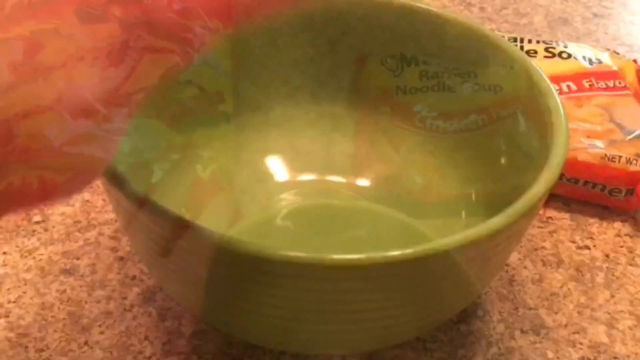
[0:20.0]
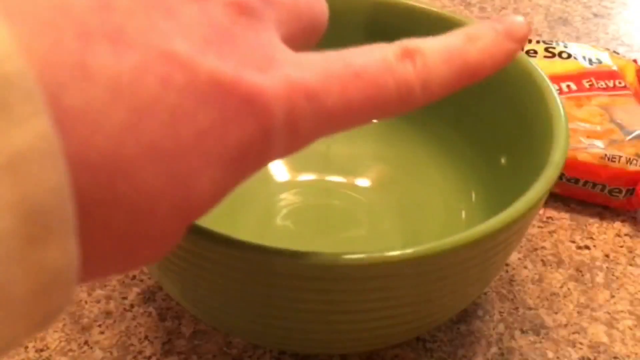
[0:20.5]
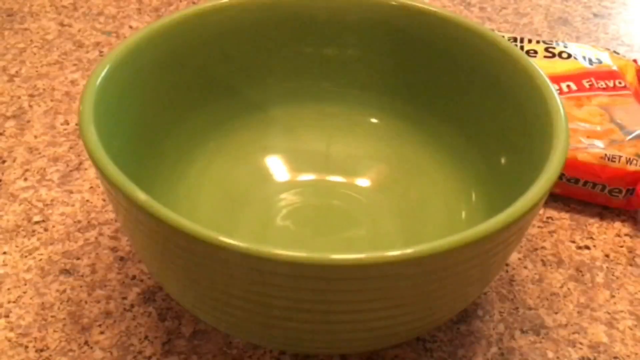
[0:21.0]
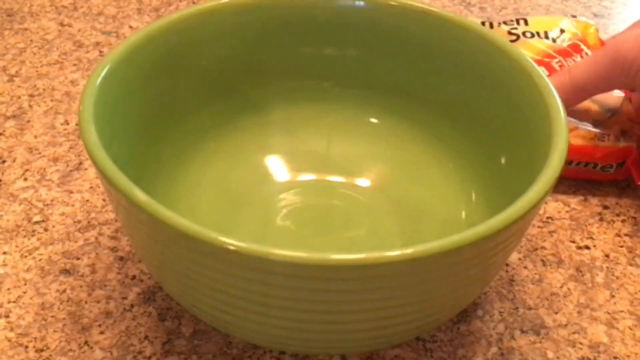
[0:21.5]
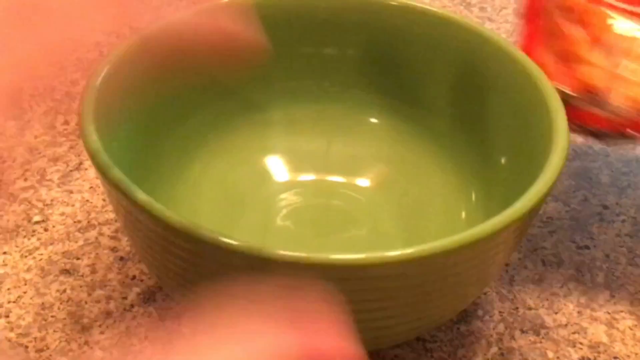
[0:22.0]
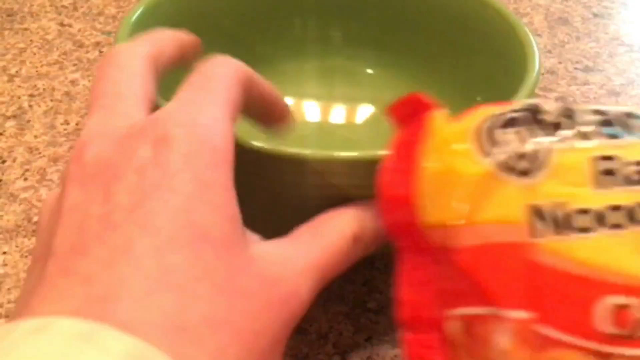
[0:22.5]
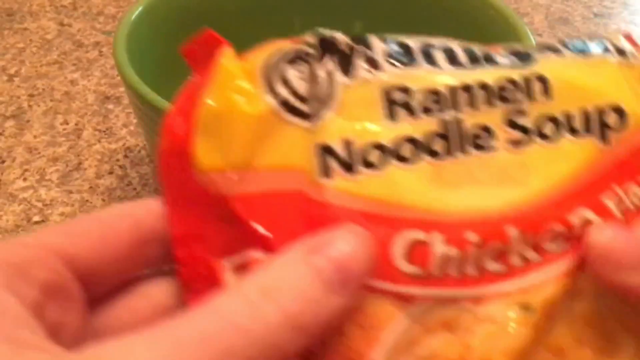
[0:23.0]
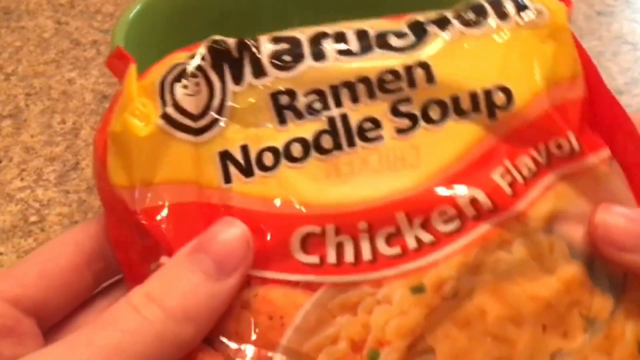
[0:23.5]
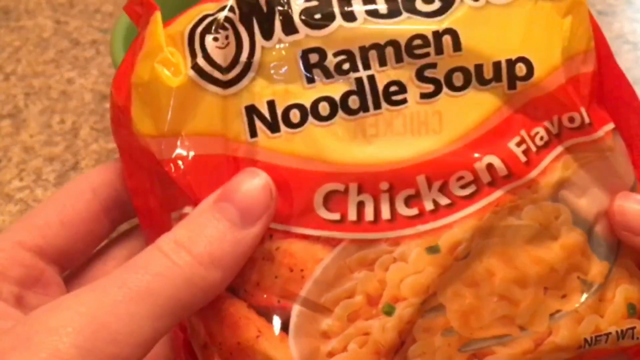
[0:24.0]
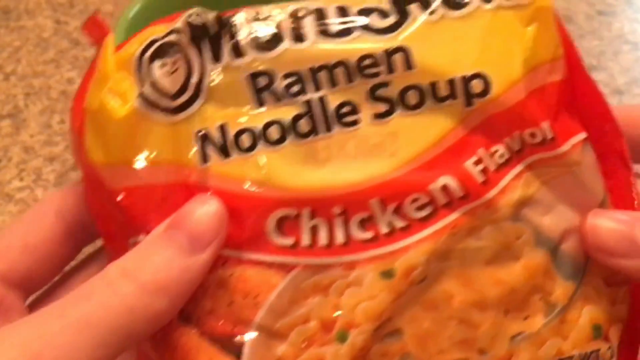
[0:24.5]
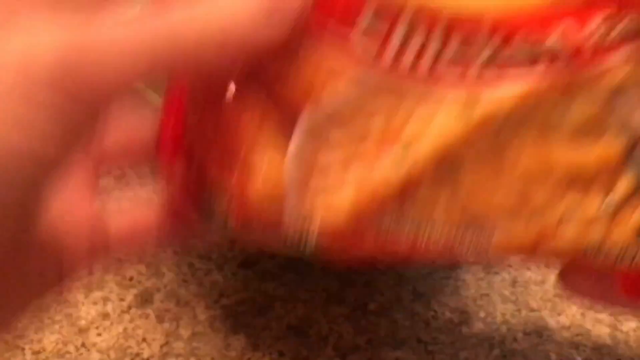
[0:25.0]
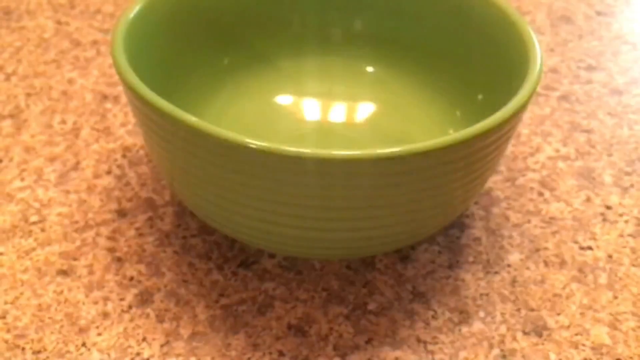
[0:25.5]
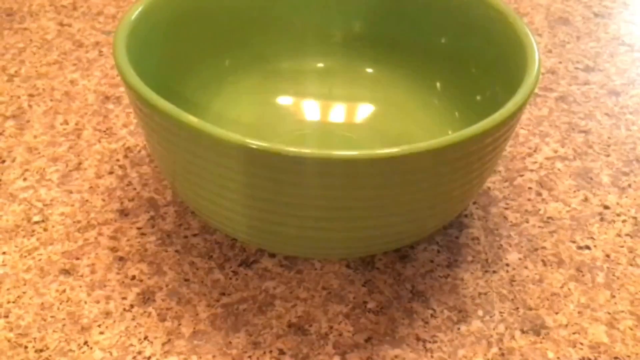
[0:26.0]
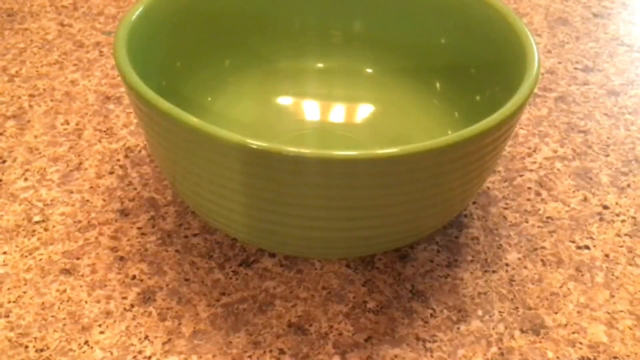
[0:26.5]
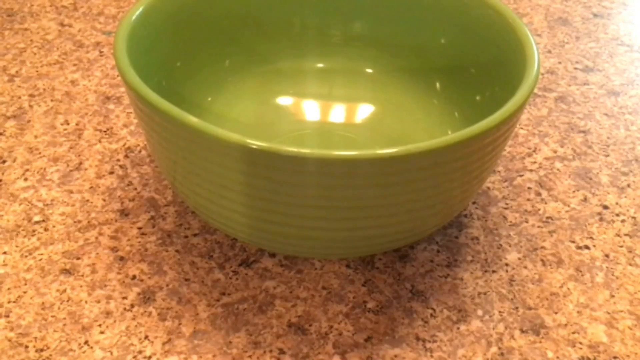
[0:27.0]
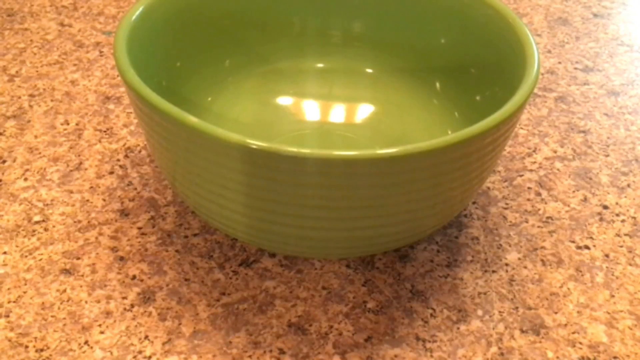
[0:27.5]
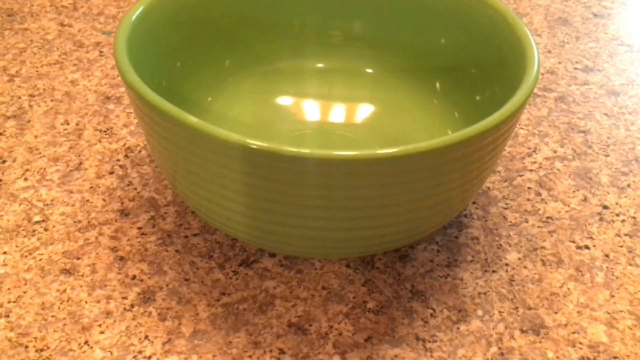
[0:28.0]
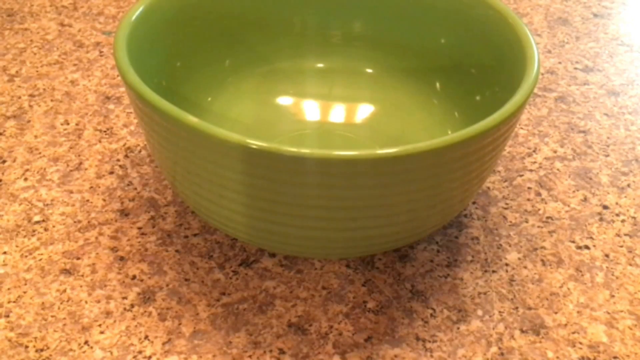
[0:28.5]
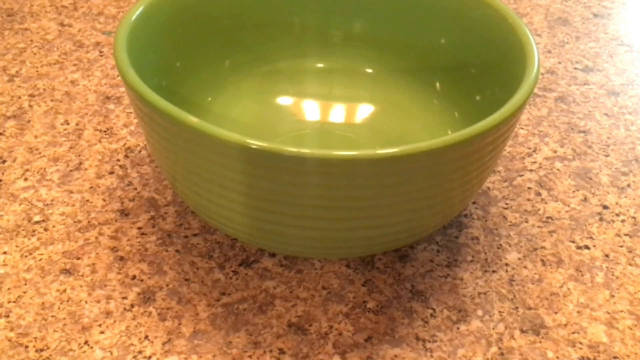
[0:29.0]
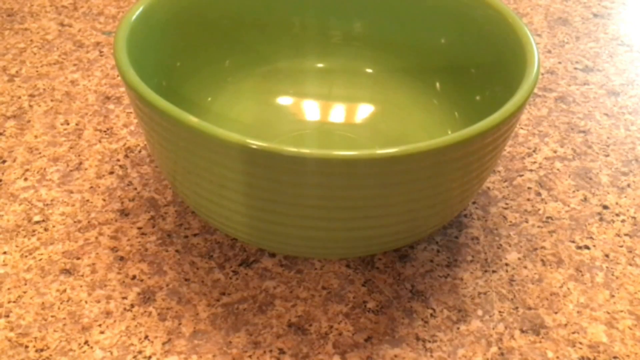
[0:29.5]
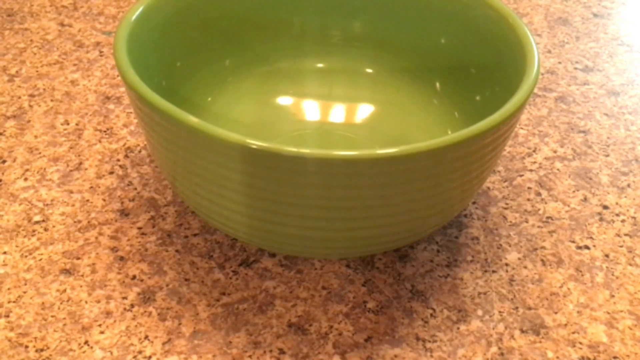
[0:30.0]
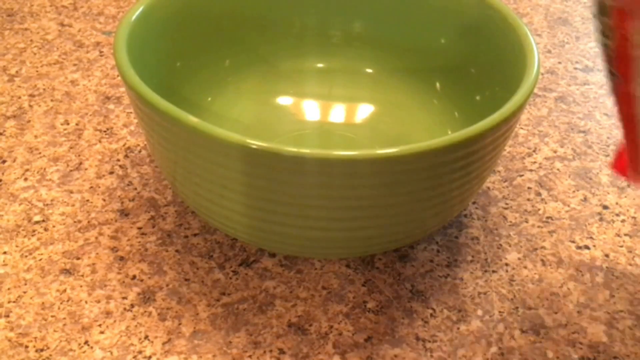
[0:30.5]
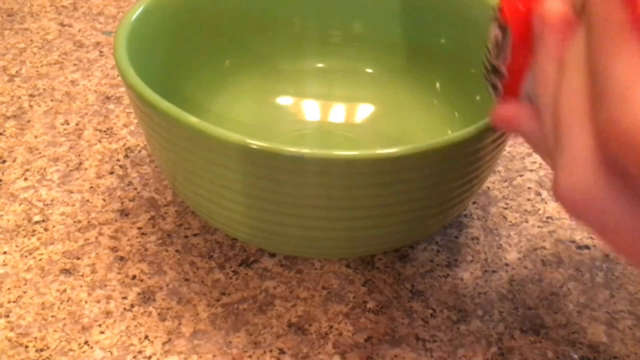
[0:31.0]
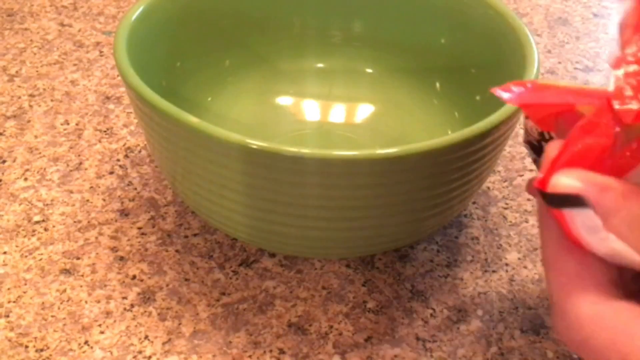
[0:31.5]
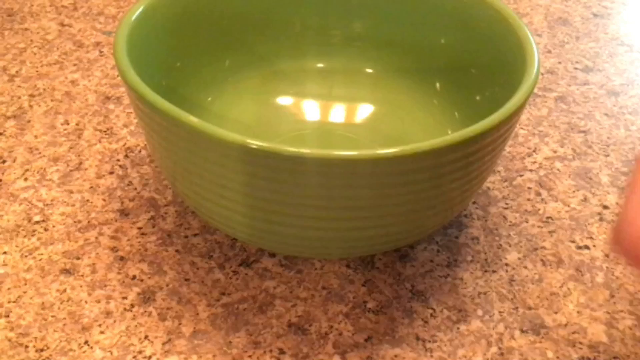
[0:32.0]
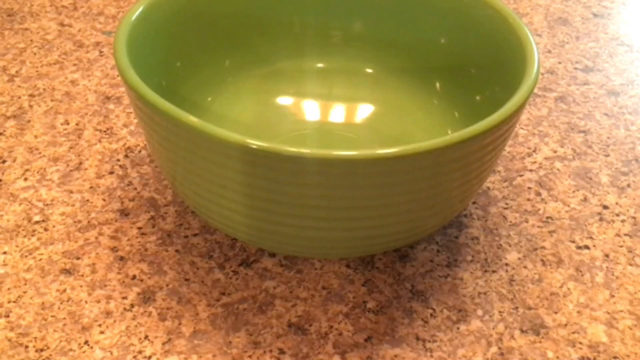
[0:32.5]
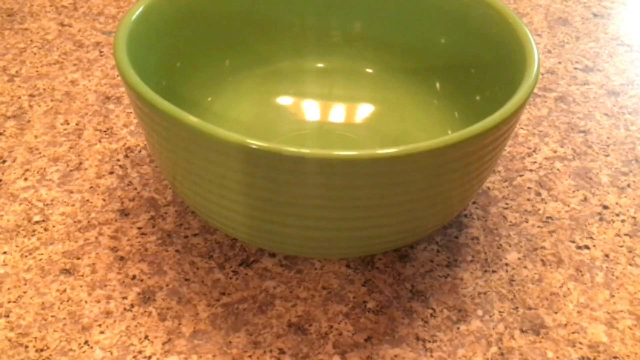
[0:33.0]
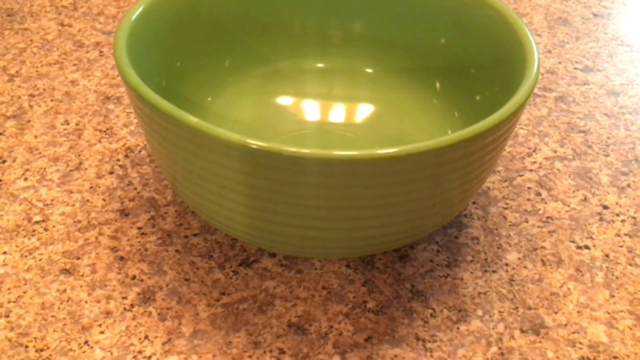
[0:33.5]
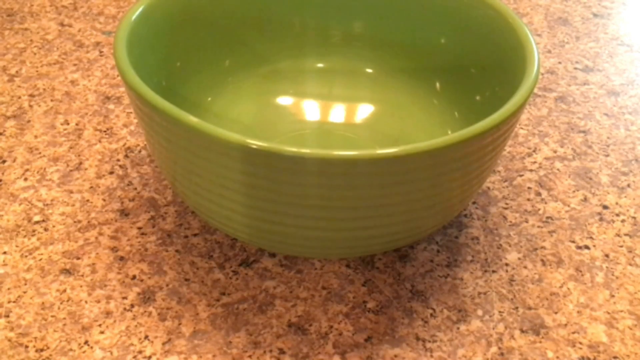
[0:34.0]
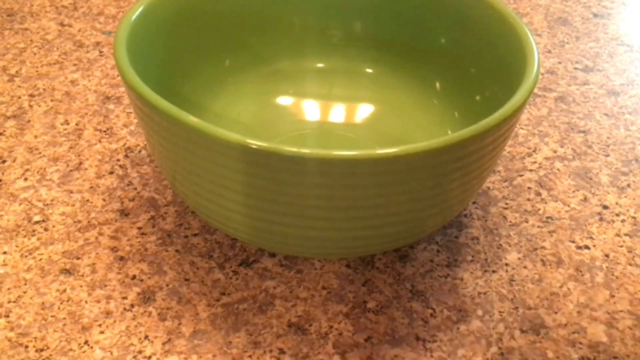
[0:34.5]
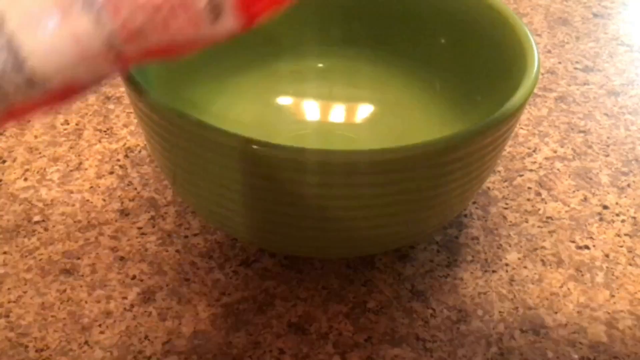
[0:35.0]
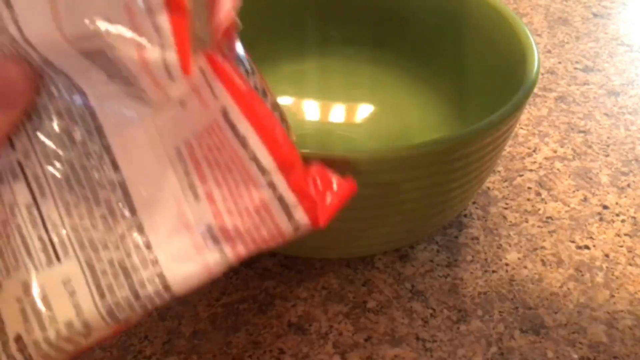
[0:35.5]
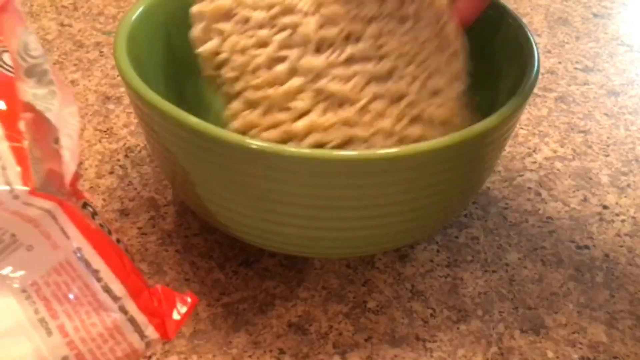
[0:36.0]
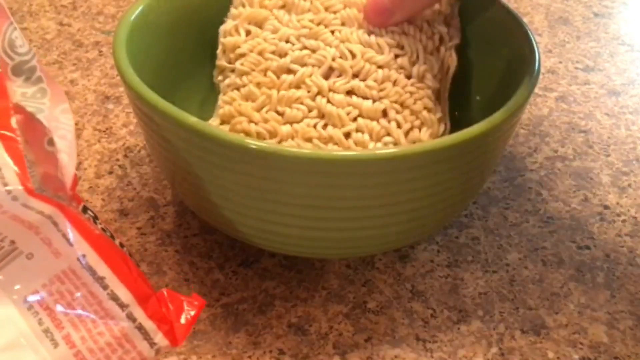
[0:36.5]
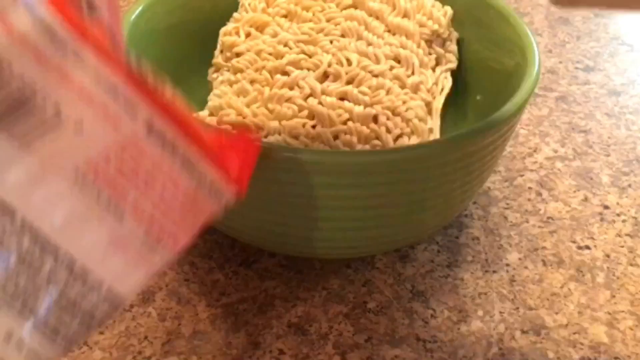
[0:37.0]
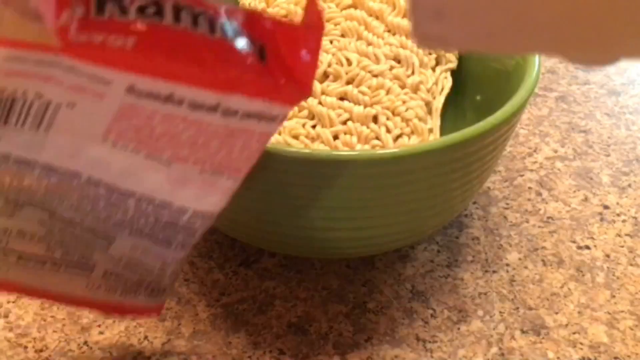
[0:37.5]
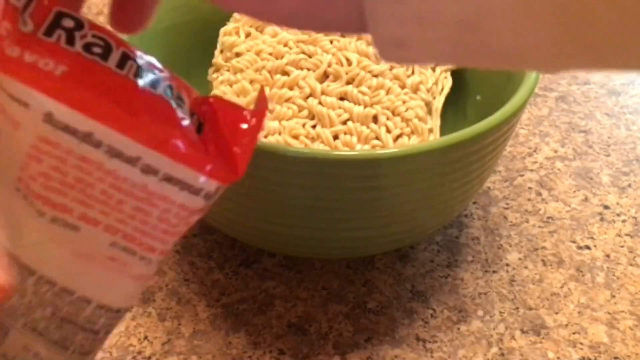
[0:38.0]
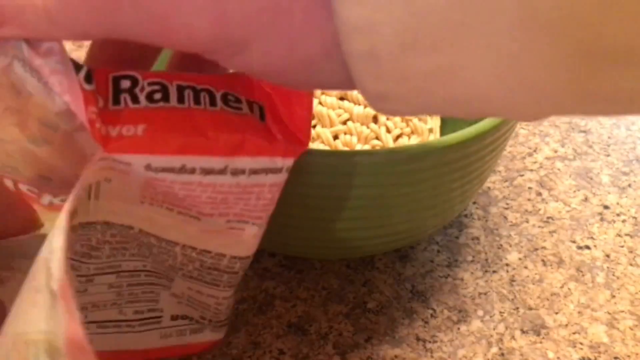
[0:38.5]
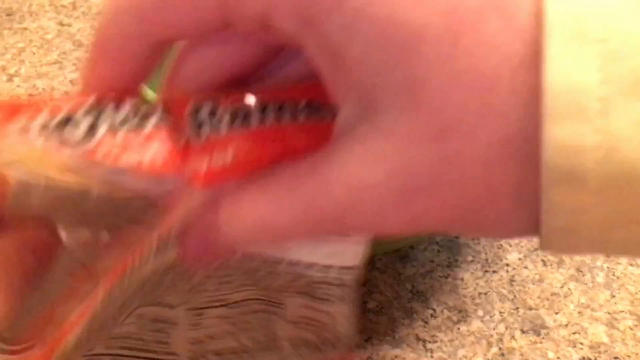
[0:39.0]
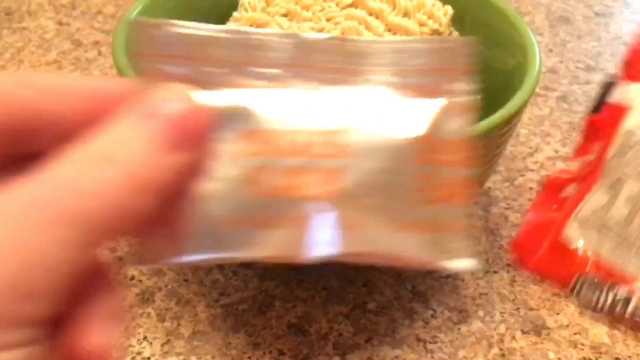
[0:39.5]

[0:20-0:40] A person in a yellow long-sleeved shirt buttoned at the wrist shows a green ceramic bowl and then the package of chicken ramen soup. On the right-hand side, the person tears the ramen package open. The shot then changes to a picture of just the green bowl sitting by itself. Back in frame, the person is holding the noodles from the opened ramen package. The person takes the spice packet out, shows it to the camera, and places it on the empty ramen packaging to the right of the bowl; it is not clear whether the seasoning packet will be used. The person appears to be possibly a Caucasian female.